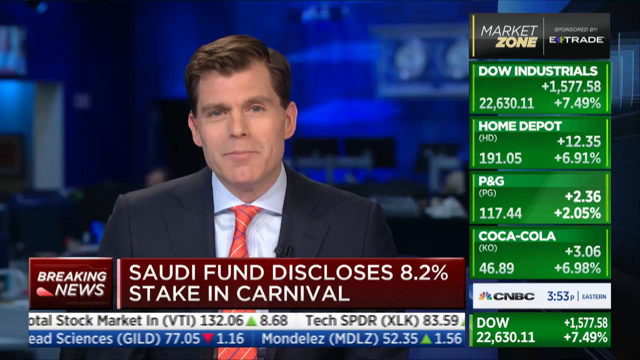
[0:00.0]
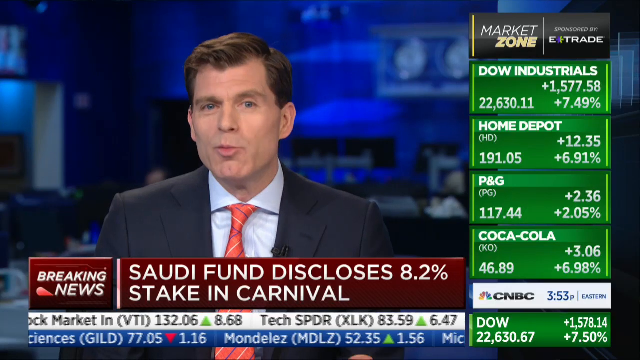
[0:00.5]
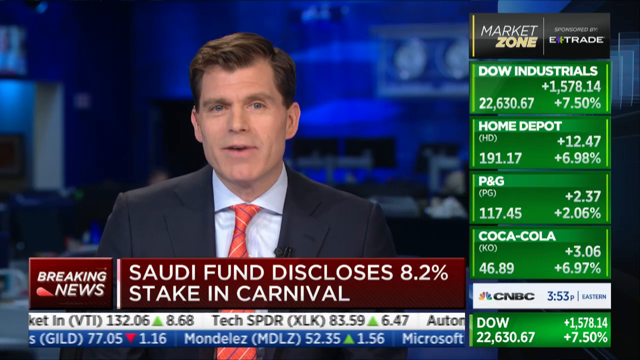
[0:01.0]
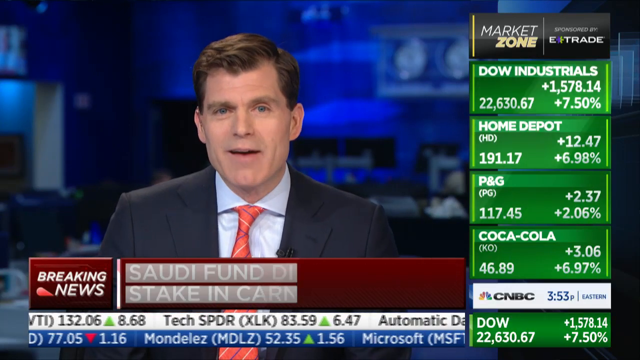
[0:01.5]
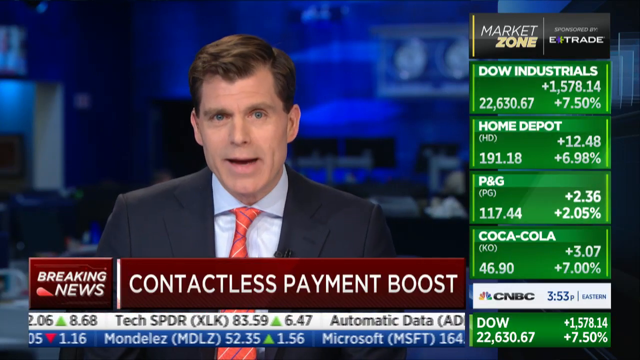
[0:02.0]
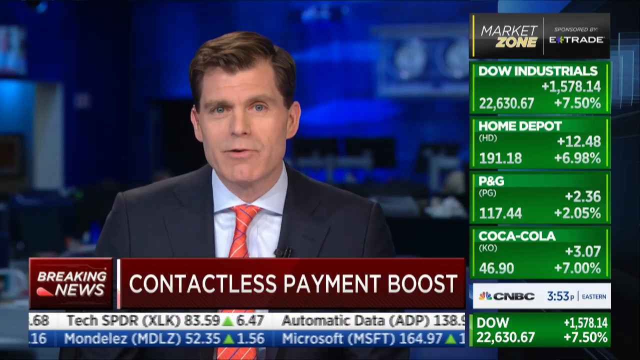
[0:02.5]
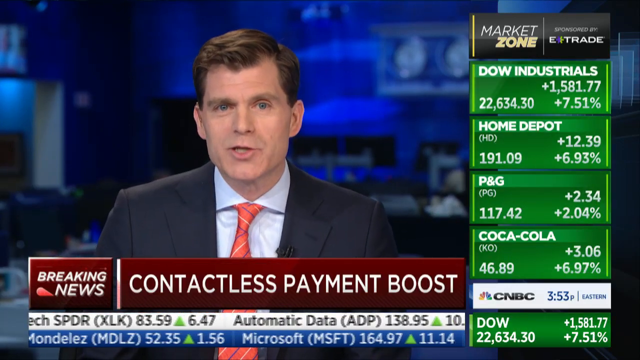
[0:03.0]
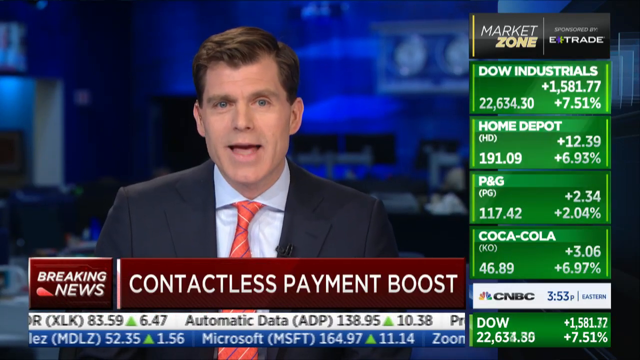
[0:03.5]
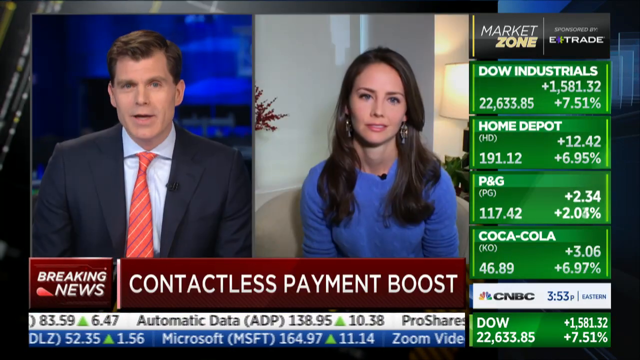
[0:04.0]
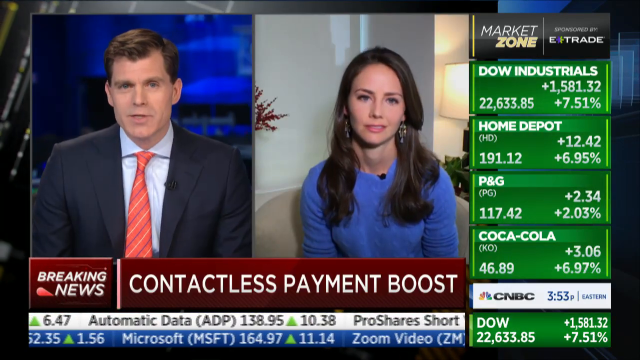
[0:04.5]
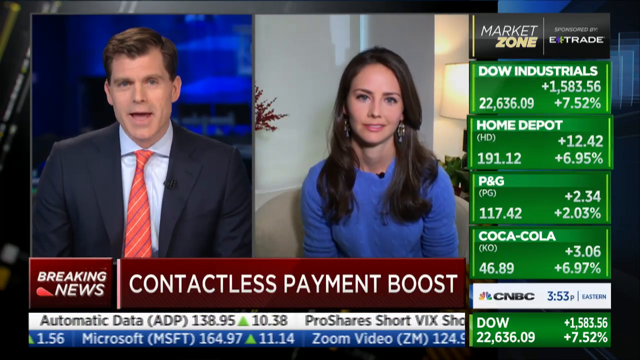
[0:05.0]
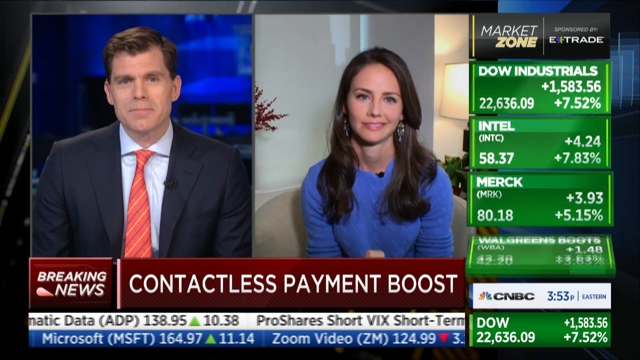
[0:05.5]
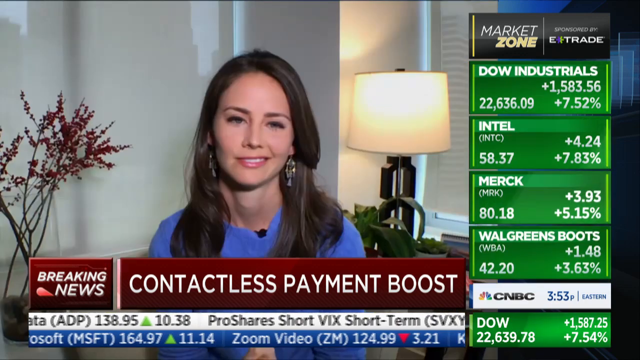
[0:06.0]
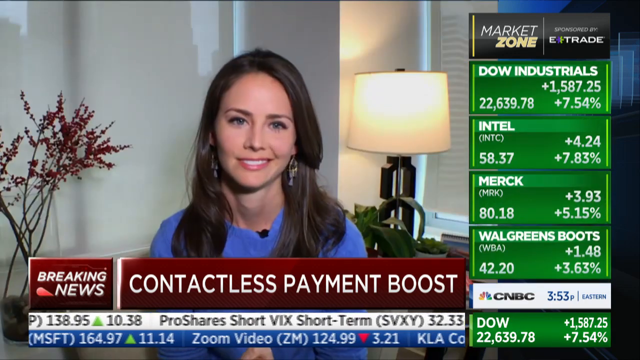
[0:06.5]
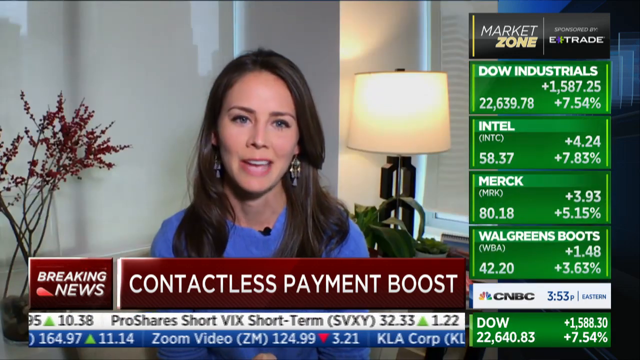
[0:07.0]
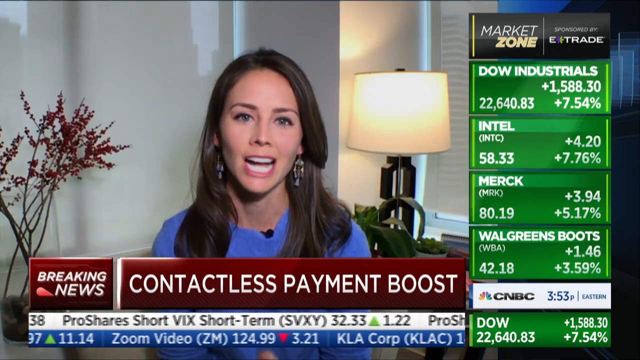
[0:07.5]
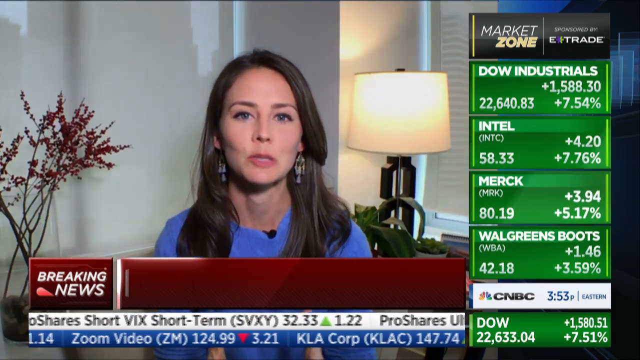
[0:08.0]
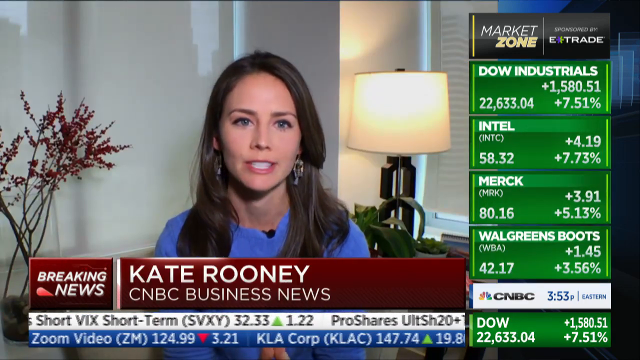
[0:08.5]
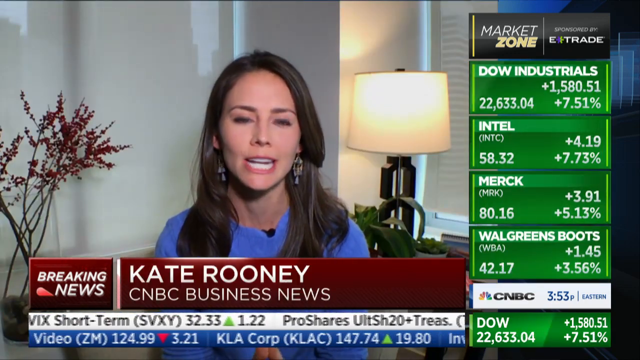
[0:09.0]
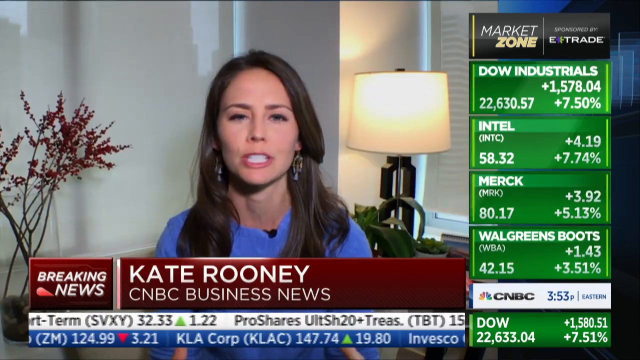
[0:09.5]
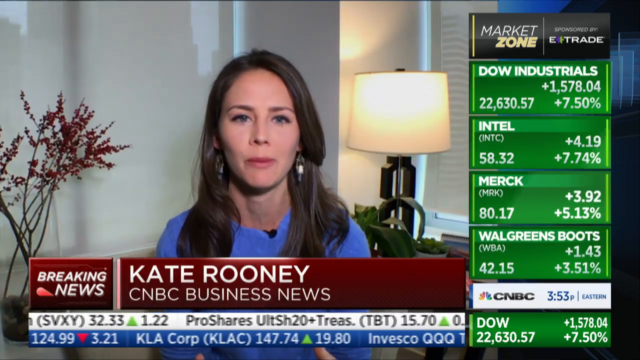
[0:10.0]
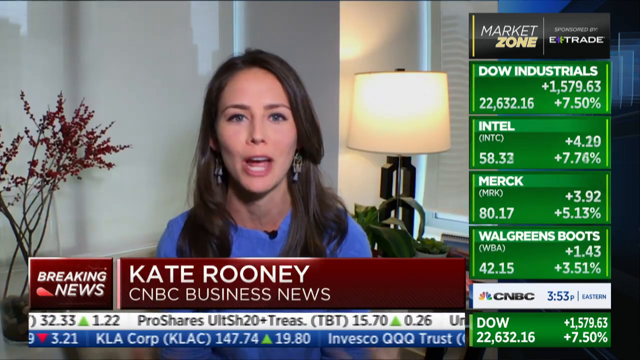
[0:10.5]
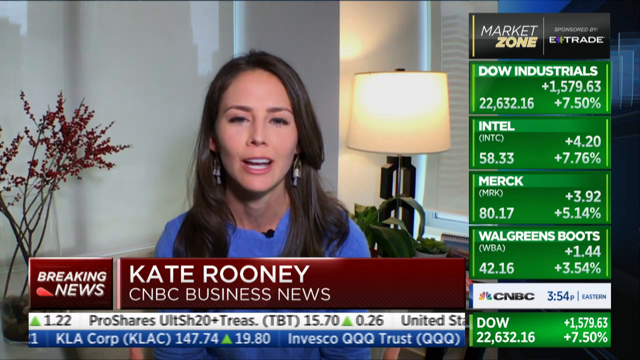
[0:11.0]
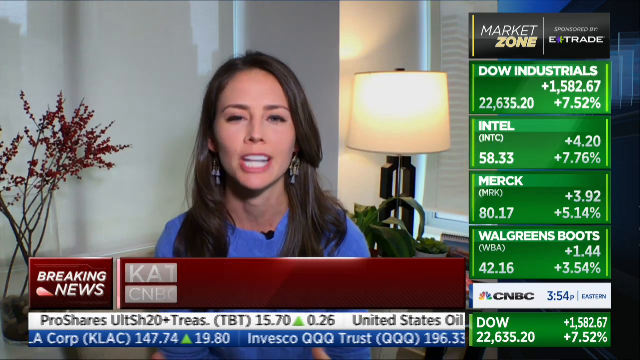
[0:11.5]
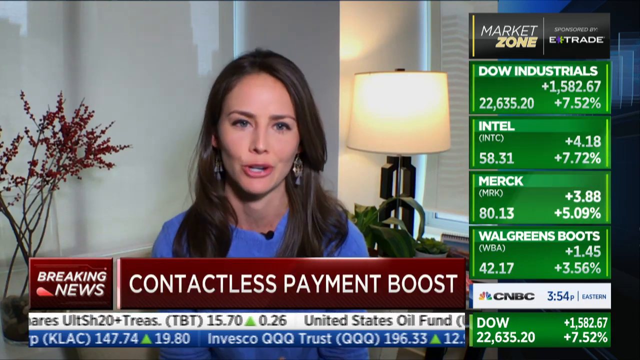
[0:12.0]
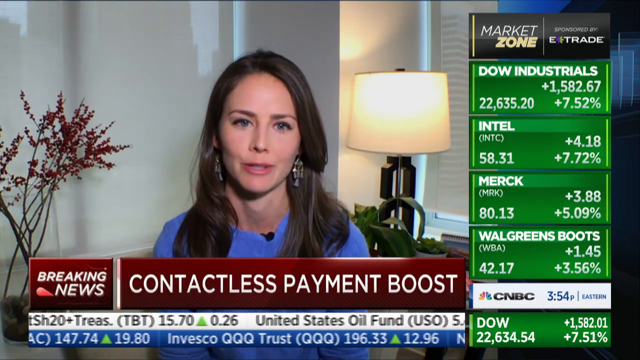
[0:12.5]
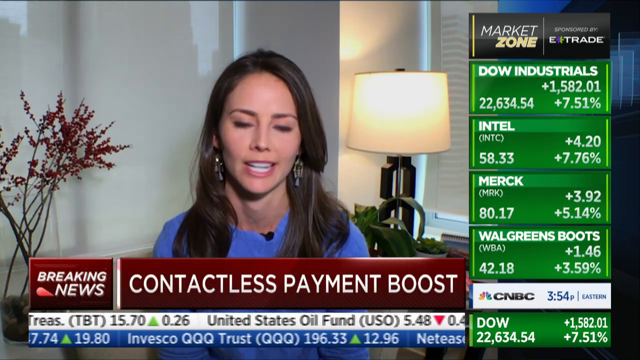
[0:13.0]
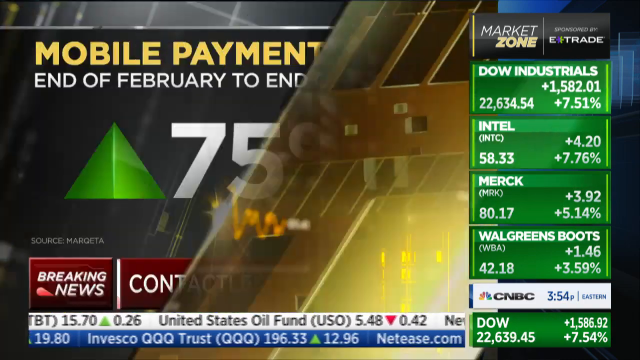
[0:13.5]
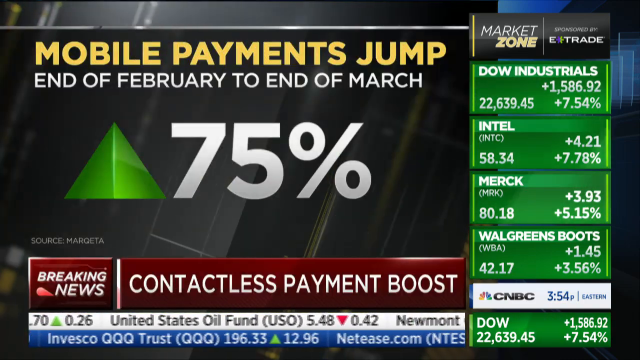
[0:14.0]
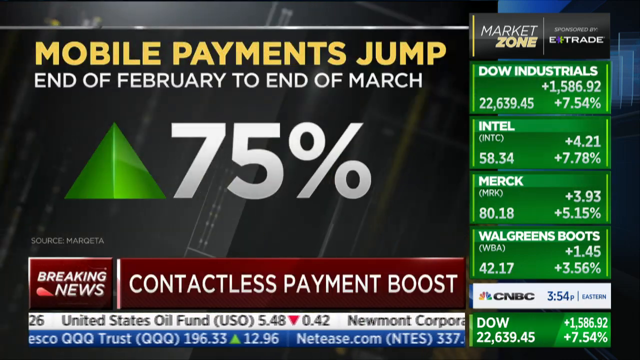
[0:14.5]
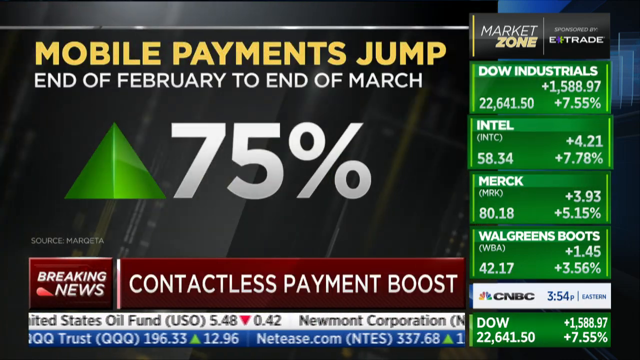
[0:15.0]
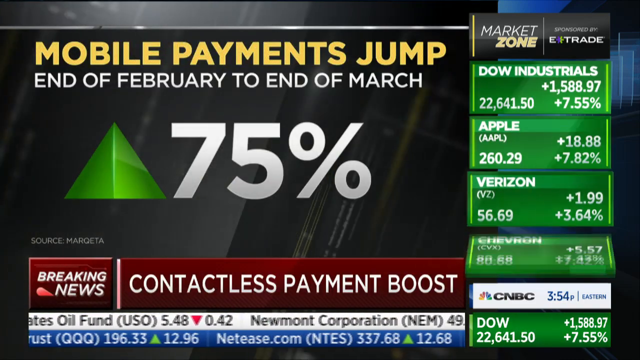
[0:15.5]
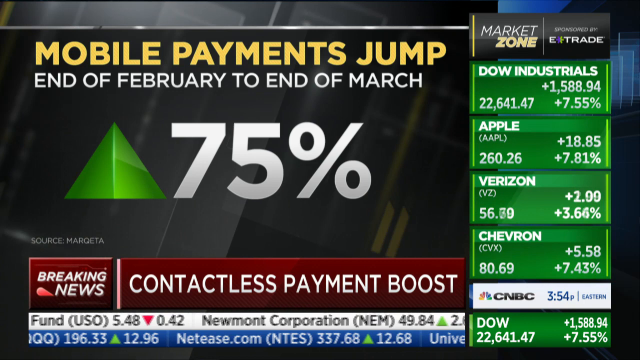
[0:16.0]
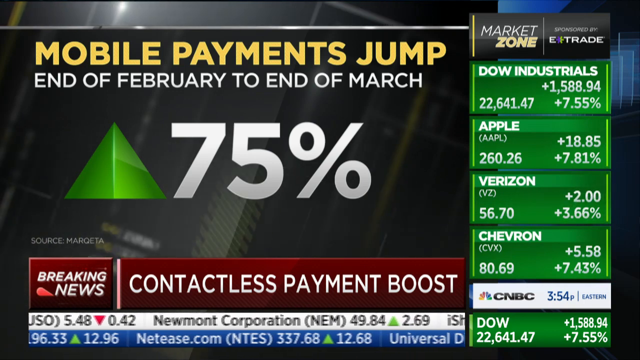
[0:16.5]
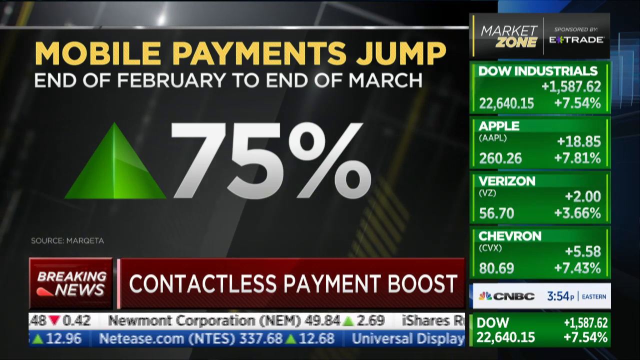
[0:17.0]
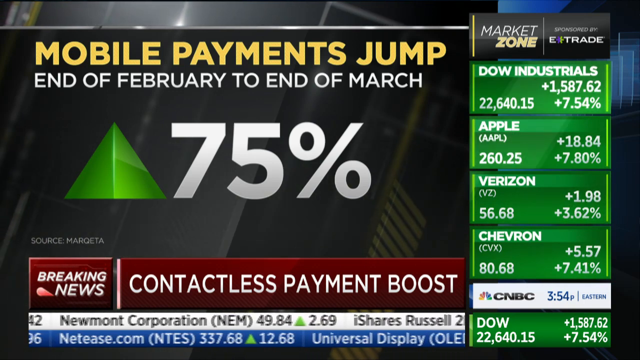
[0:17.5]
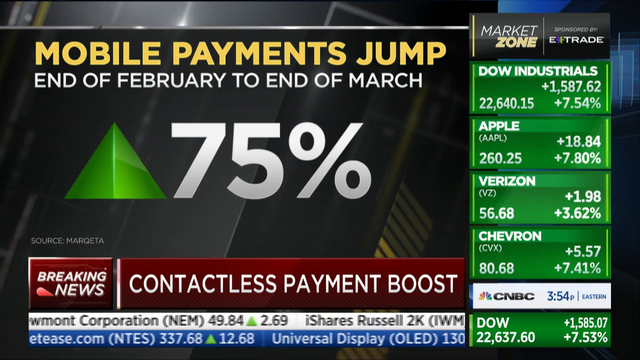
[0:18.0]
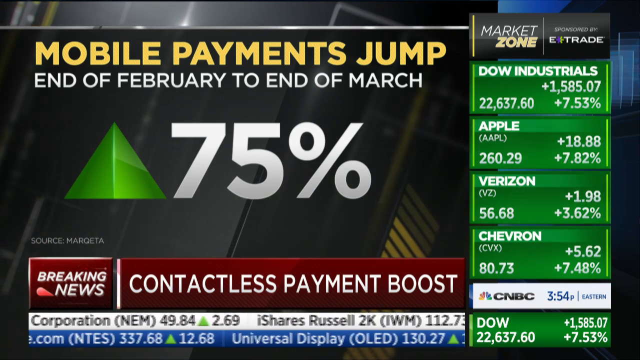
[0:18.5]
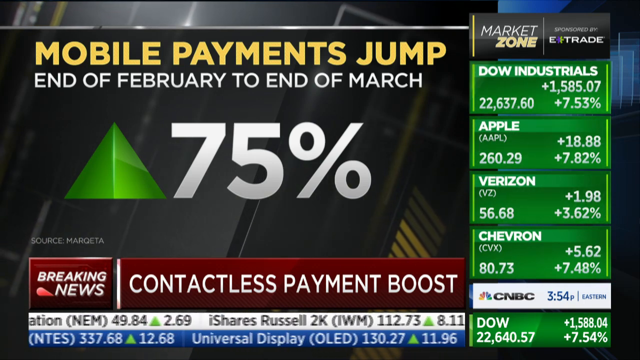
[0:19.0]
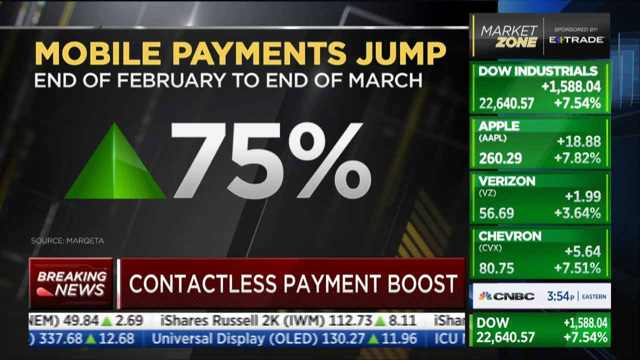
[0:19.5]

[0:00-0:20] The video opens in an indoor newsroom setting. A white gentleman, about 55 to 60 years old, wears a black suit, a white shirt and a red striped tie. He is sitting, smiling at the camera and talking. His hair is black and short, slightly combed to the left side. On the television screen are the words "breaking news, Saudi Band discloses 8.2% stake in Carnival", and on the far right is a vertical green strip showing the day's market prices. It reads "market zone" and shows how the Dow Industrial, Home Depot, P&G and Coca-Cola are performing. The presenter talks very passionately toward the camera. The scene changes to show the words "contactless payment boost", and the gentleman is then seen side by side, chatting with a guest who is going to talk about contactless payments. The guest is a white or European woman about 35 years old with long black hair, wearing a long blue sweater, looking directly at the camera as she chats with the news presenter at the studio.